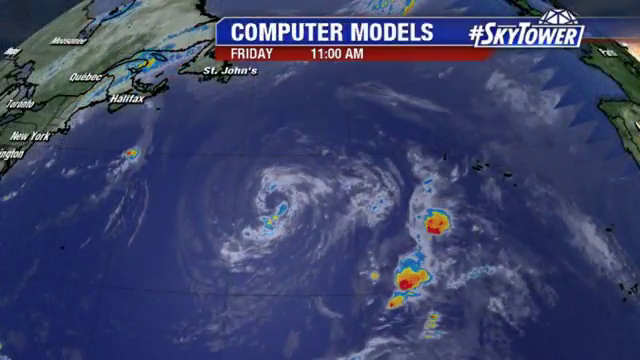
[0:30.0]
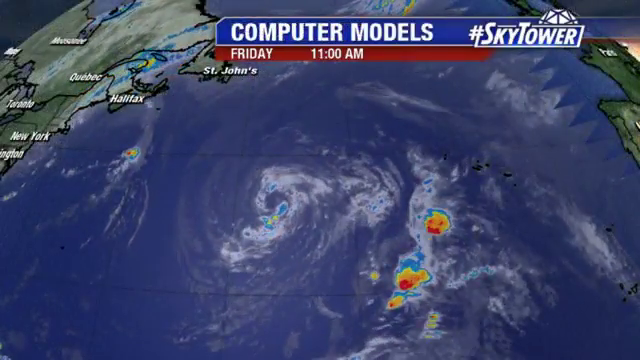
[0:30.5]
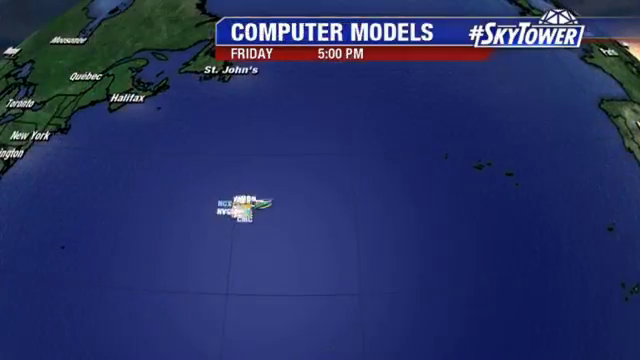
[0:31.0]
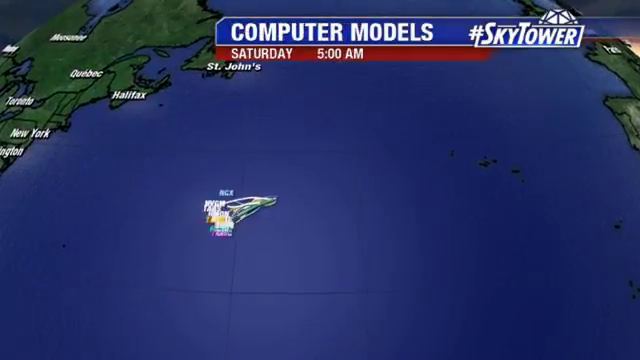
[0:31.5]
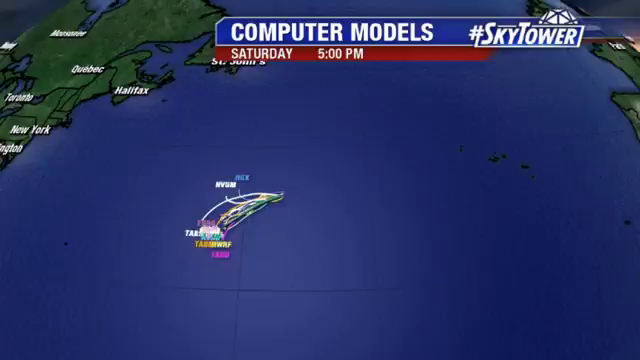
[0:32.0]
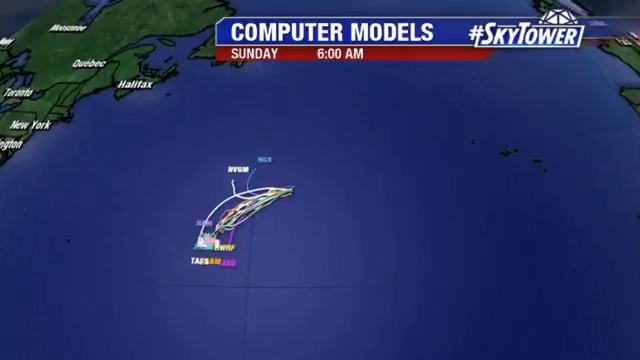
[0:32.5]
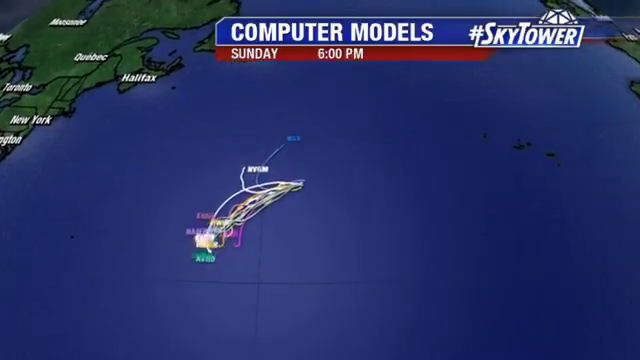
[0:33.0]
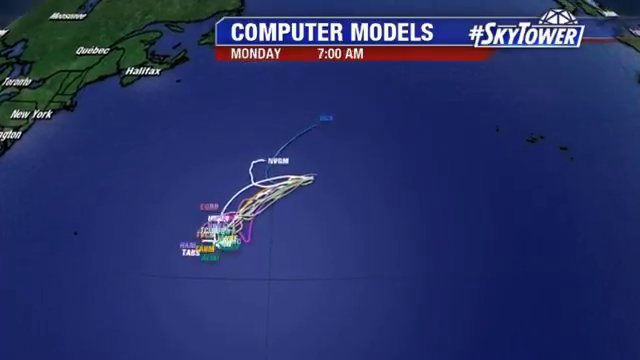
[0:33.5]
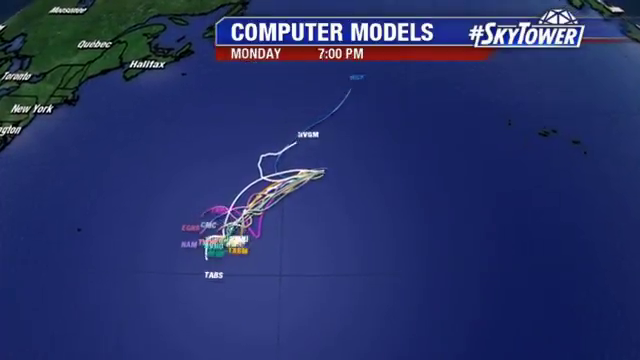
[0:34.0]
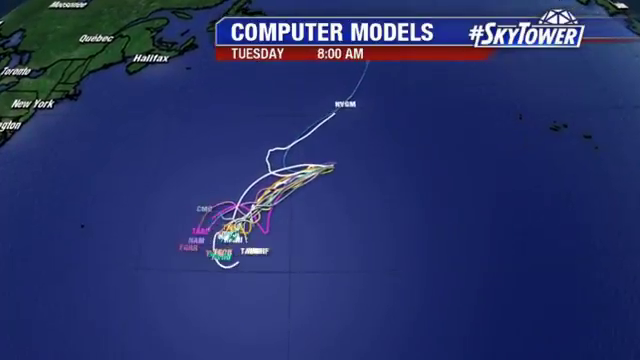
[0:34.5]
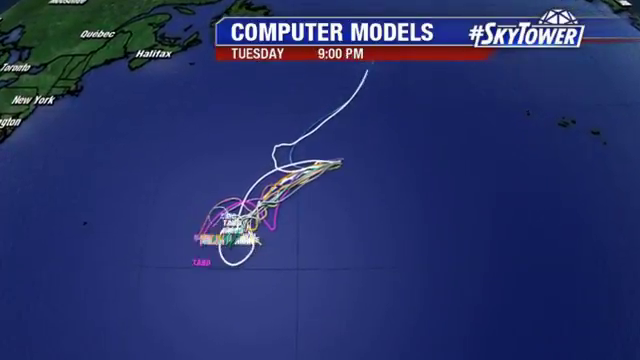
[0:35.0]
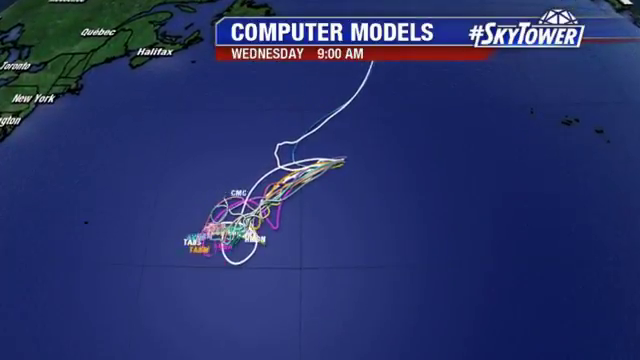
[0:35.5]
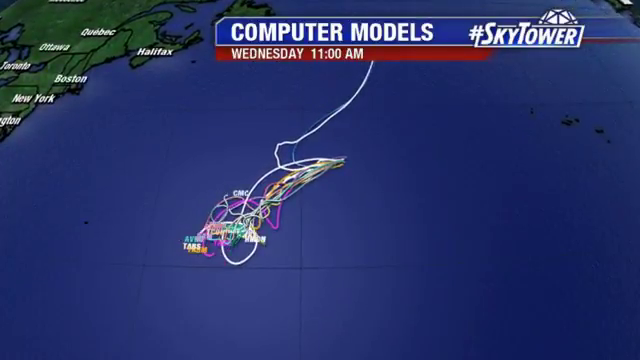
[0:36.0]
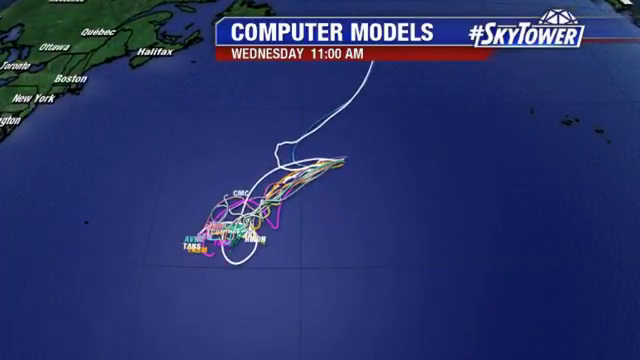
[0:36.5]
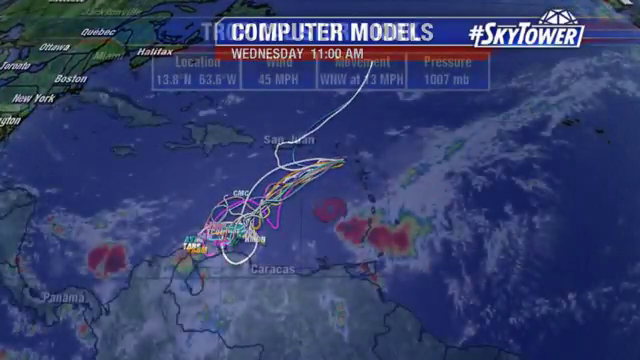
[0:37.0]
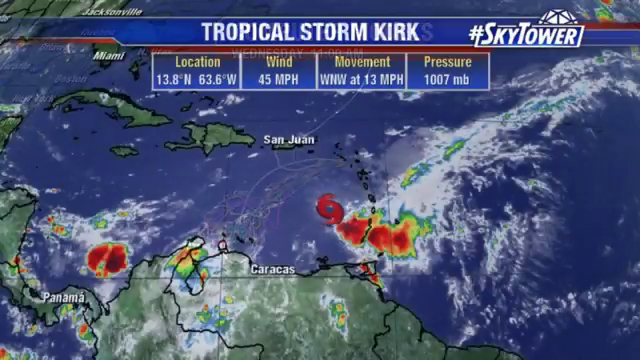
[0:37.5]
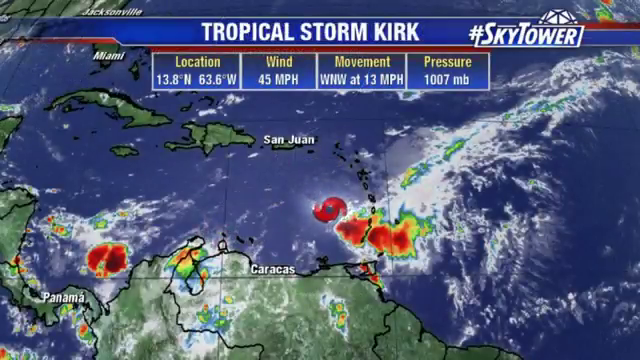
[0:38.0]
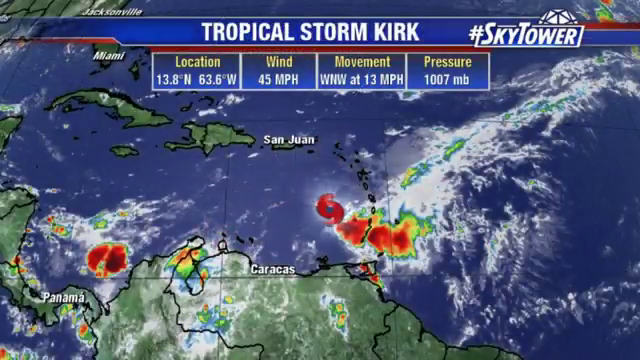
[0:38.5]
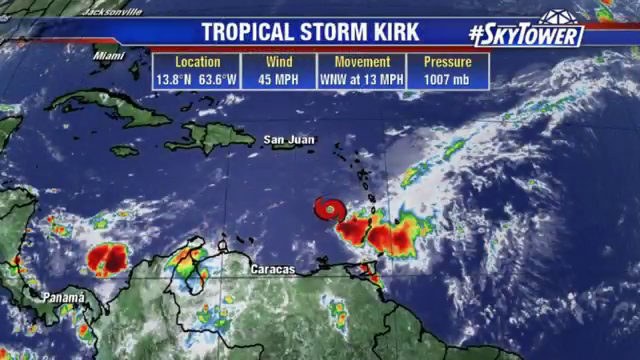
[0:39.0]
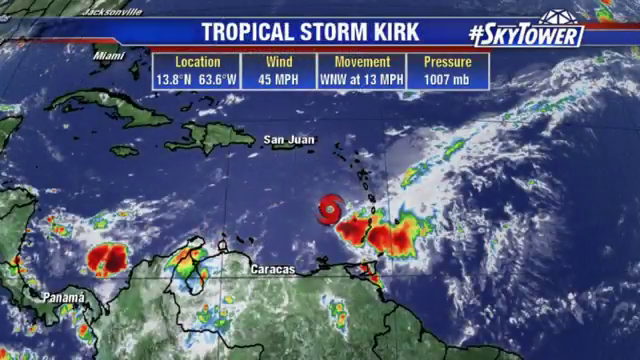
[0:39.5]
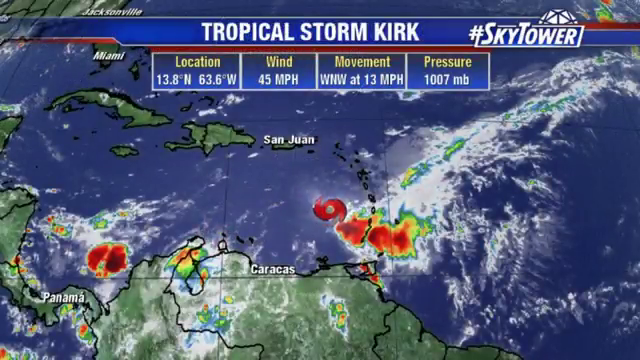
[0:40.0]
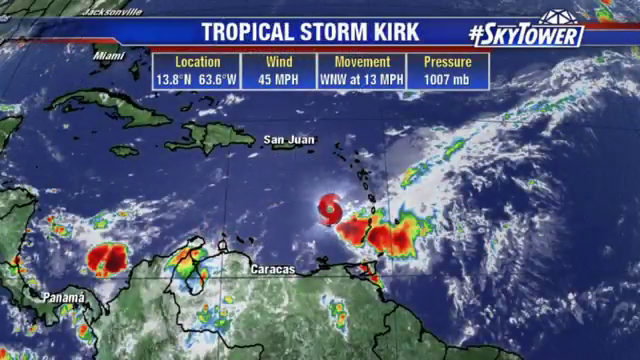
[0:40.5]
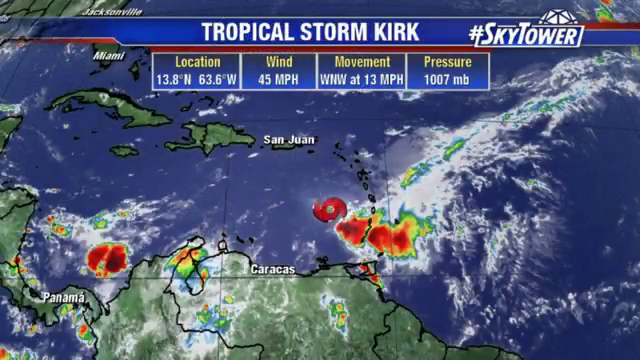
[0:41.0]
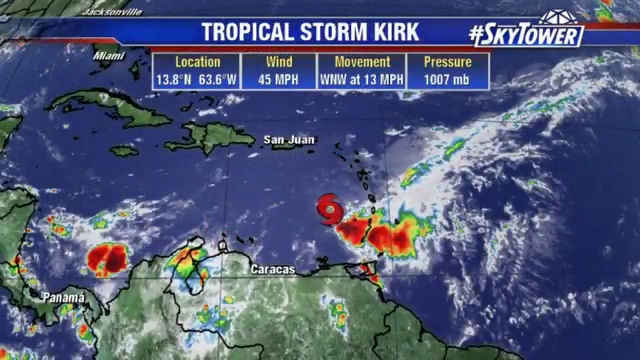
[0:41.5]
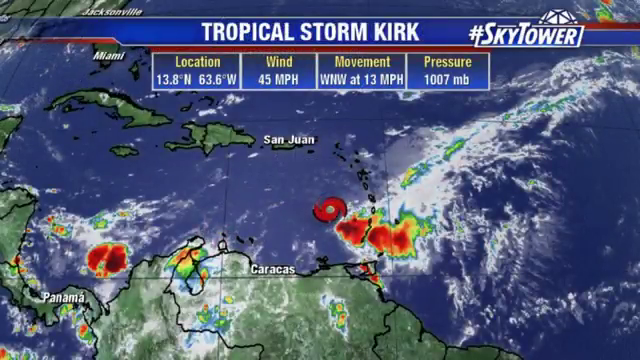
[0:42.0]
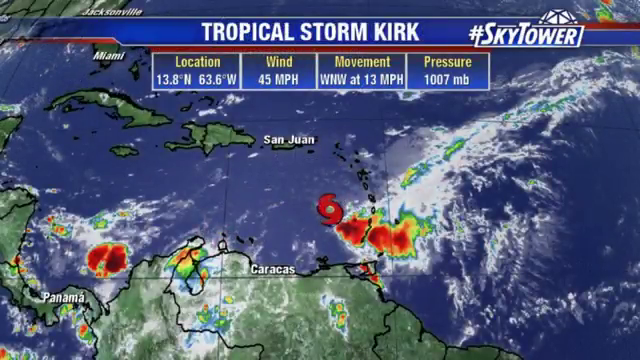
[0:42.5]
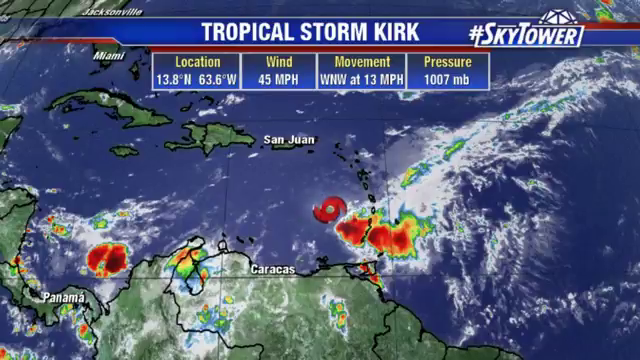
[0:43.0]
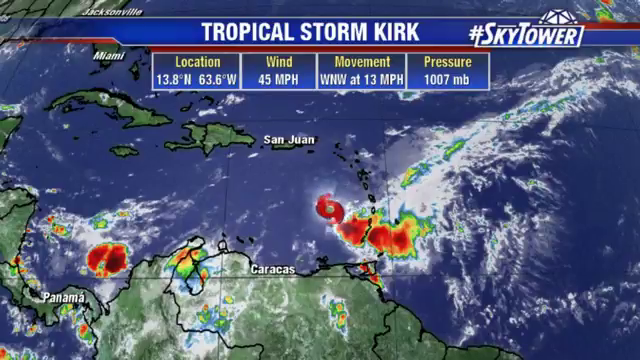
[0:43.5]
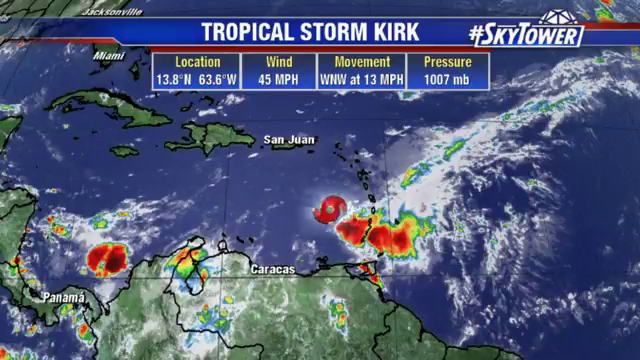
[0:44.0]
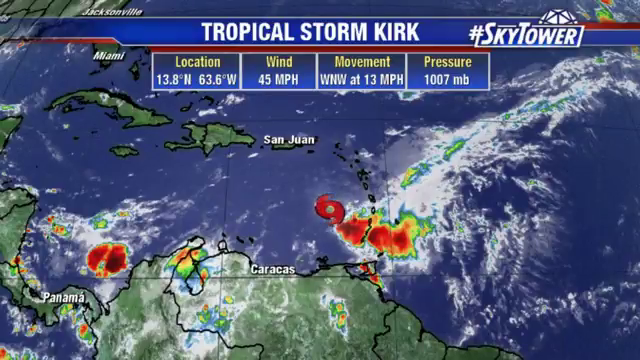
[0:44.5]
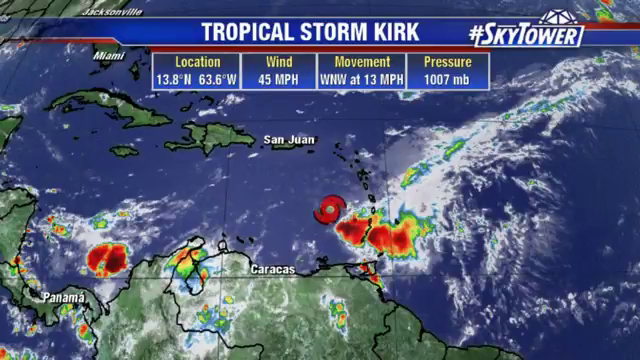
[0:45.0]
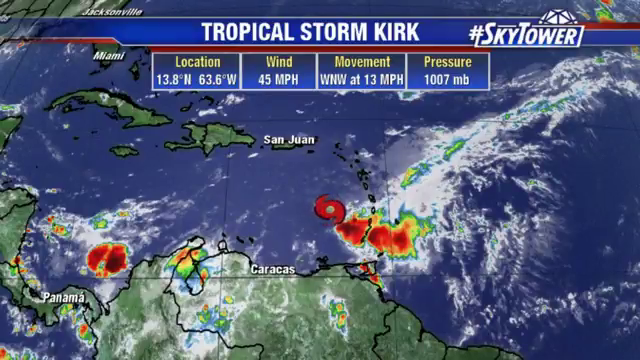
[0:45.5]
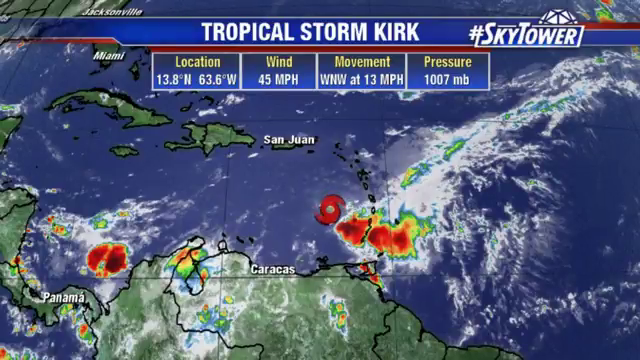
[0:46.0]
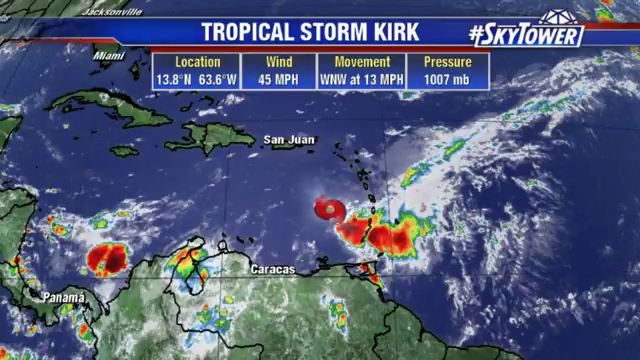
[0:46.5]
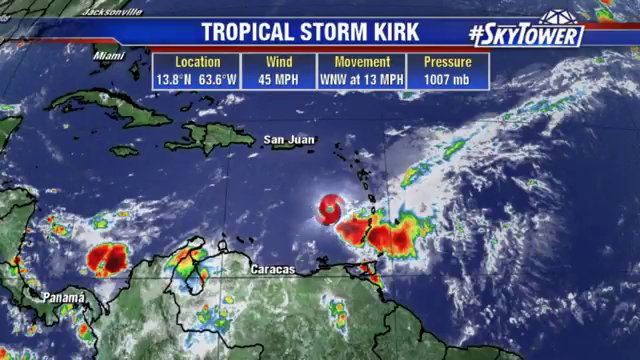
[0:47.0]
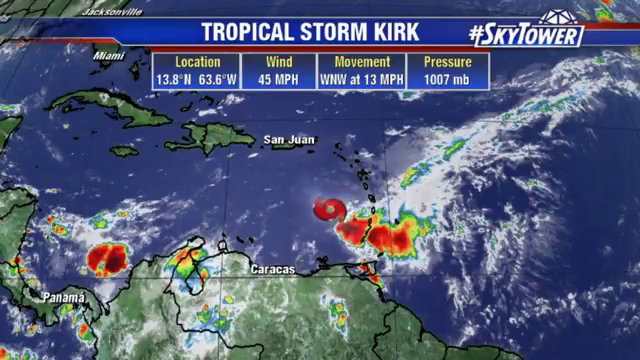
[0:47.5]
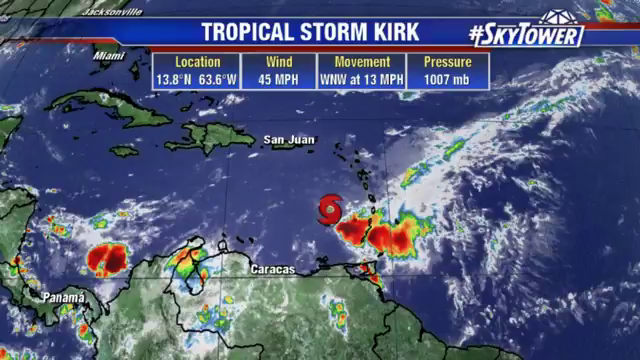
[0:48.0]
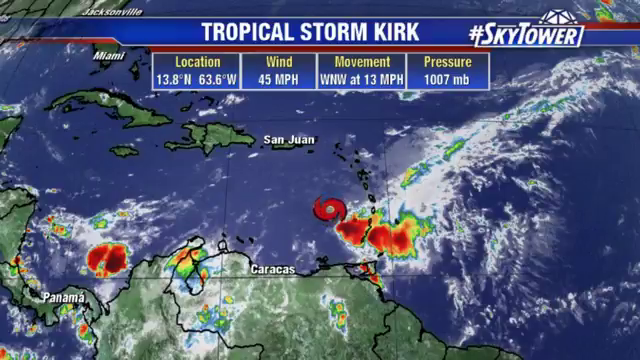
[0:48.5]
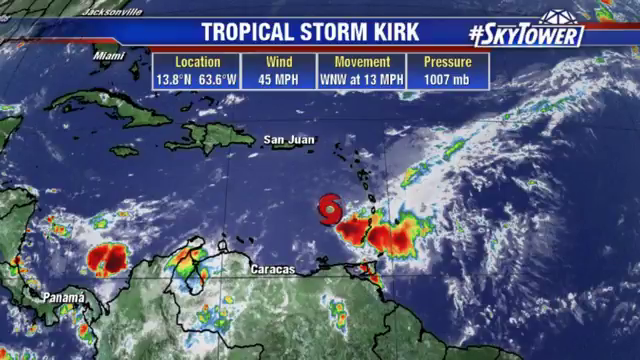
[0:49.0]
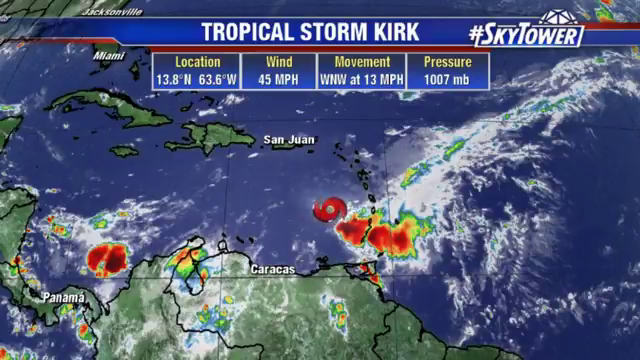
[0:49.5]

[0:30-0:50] The screen says "Computer Models". There appear to be lots of individual coloured lines going off in different directions, each with a set of initials next to it, such as CMC and TASH; these are perhaps different computer models showing the path of the storm, all heading in slightly different directions. Next, a page says "Tropical Storm Kirk". The tropical storm is now shown in the southern part of America into the Gulf of Mexico, with Caracas and Panama City down below, Miami up above, and San Juan and other places in the Atlantic Ocean. The number 9 icon is still spinning anti-clockwise. Four pieces of information are at the top of the screen: location 13.8 degrees north, 63.6 degrees west; wind 45 miles an hour; movement west-northwest at 13 miles an hour; and pressure 1,007 MV. The sea is blue, the land is green, and the weather systems are shown in many different colours.